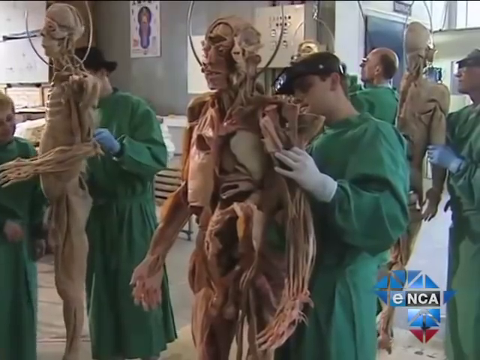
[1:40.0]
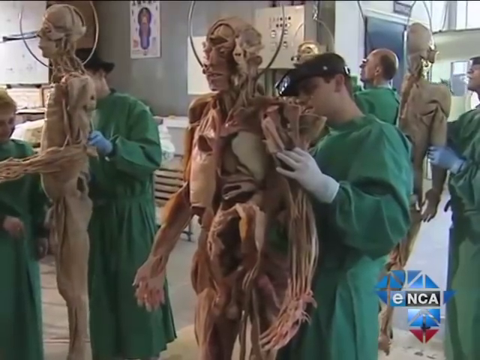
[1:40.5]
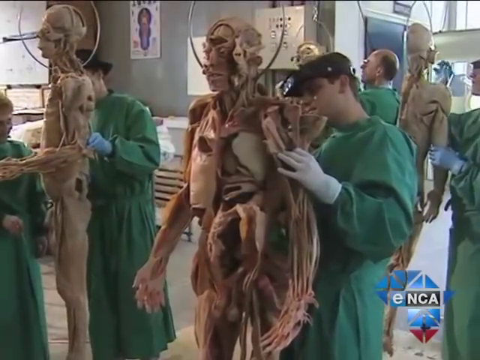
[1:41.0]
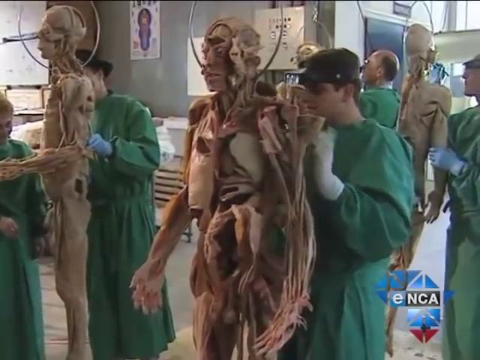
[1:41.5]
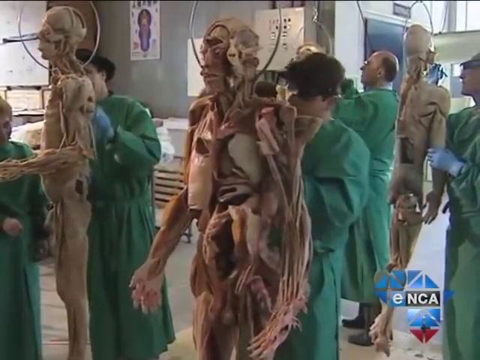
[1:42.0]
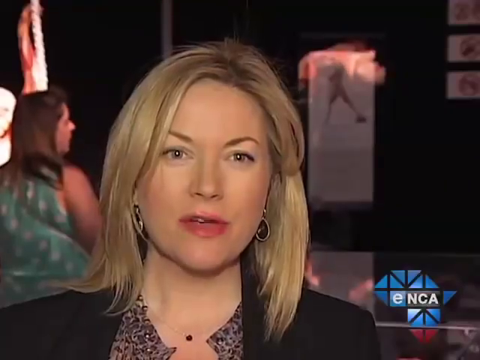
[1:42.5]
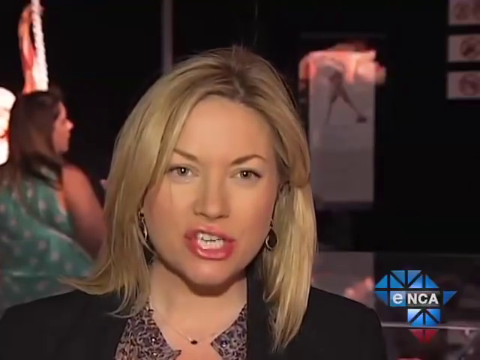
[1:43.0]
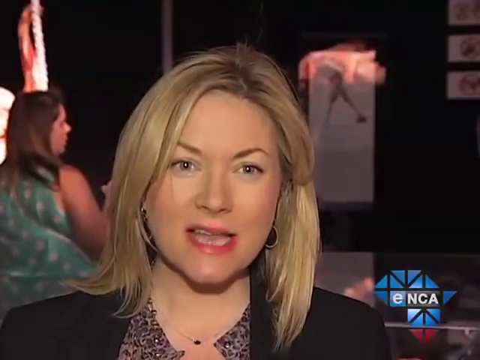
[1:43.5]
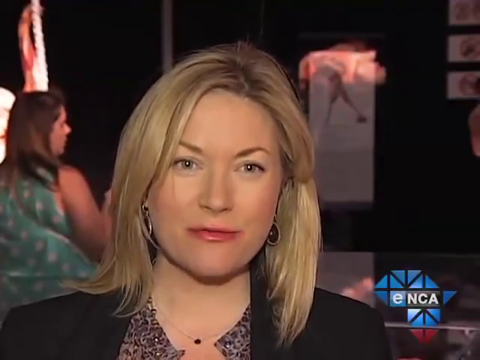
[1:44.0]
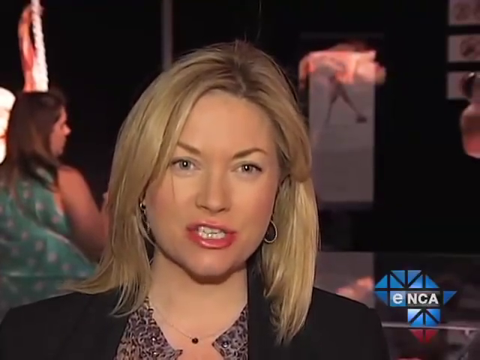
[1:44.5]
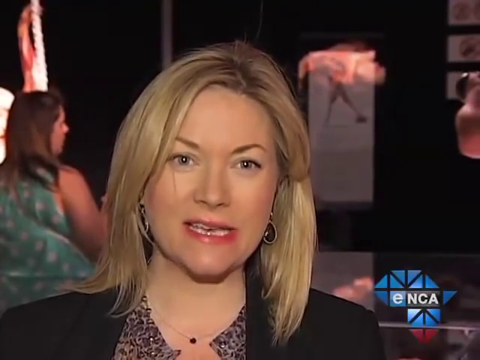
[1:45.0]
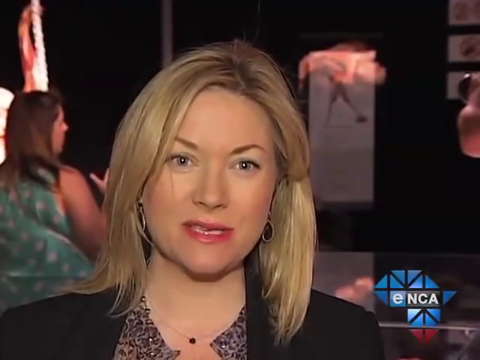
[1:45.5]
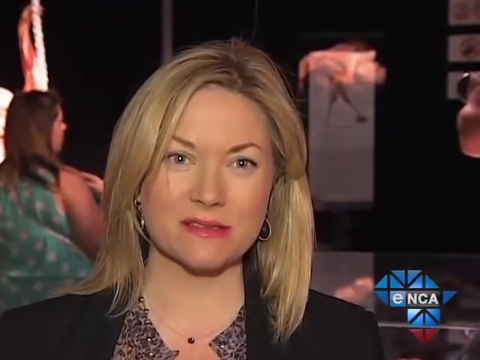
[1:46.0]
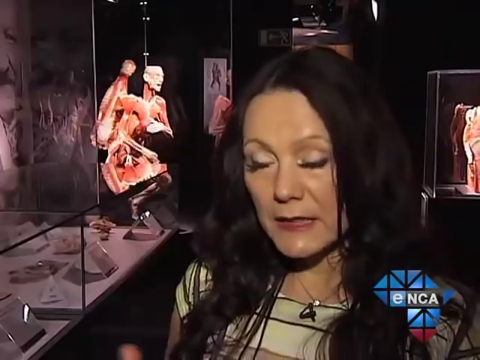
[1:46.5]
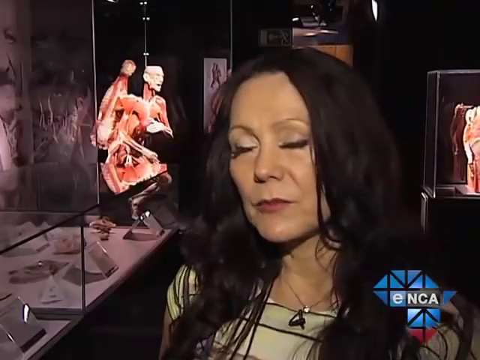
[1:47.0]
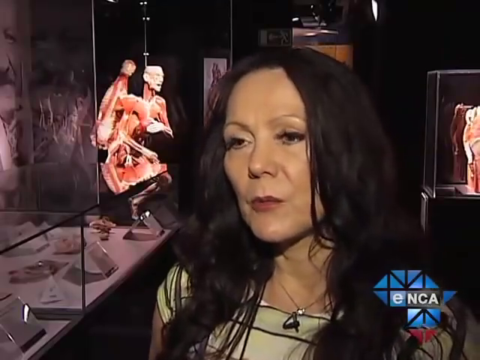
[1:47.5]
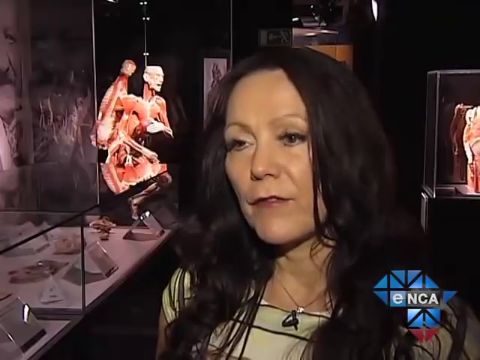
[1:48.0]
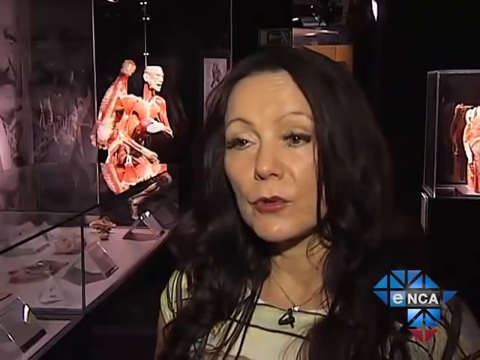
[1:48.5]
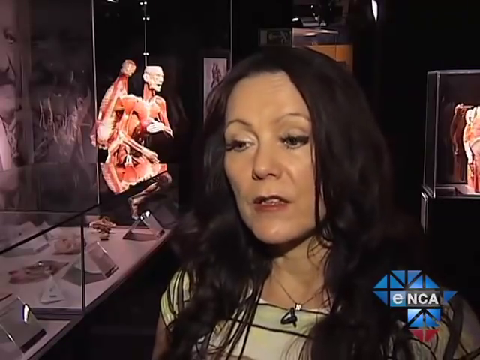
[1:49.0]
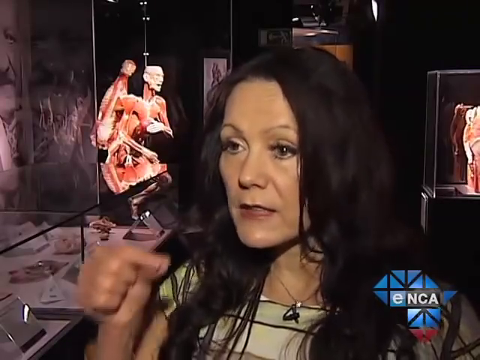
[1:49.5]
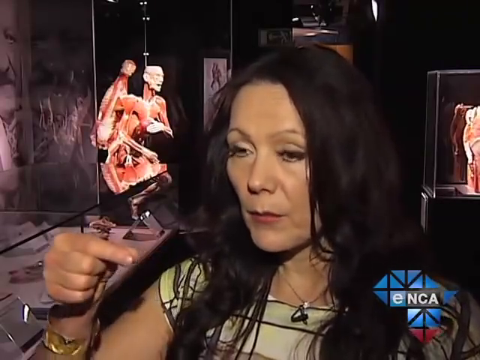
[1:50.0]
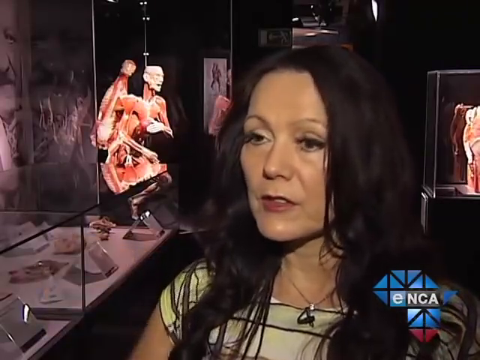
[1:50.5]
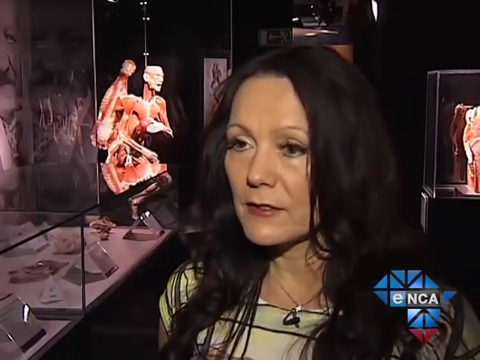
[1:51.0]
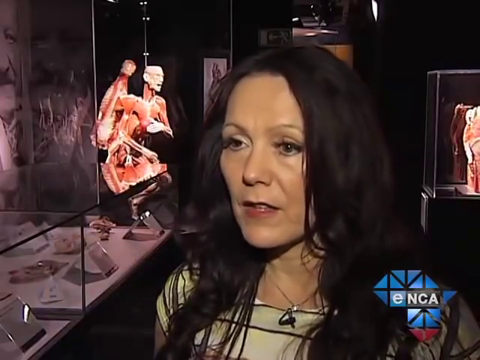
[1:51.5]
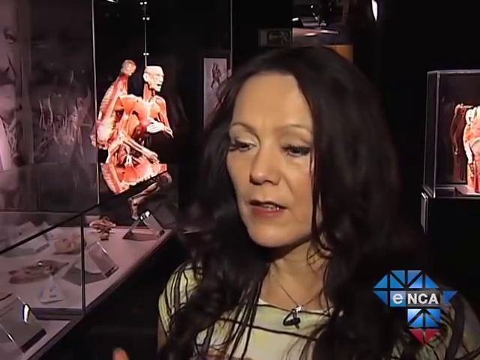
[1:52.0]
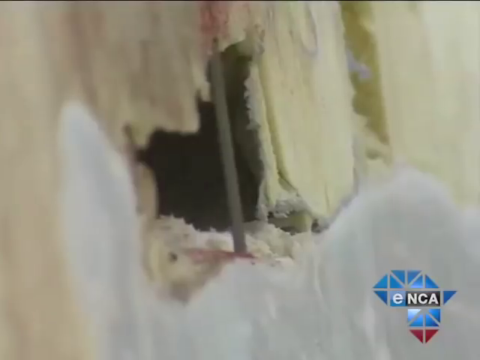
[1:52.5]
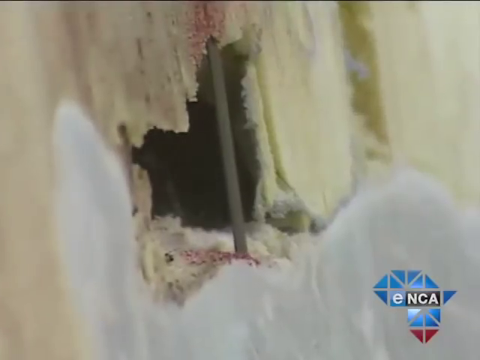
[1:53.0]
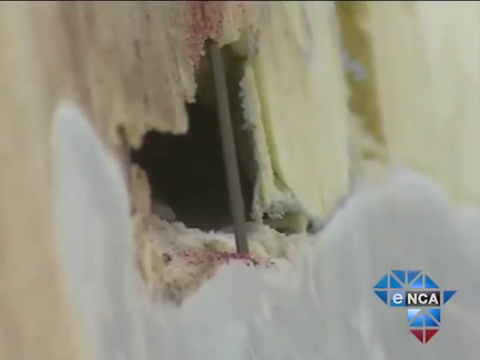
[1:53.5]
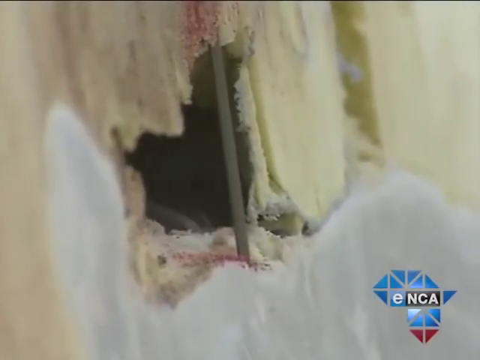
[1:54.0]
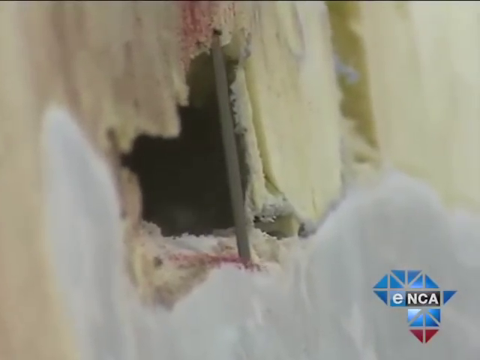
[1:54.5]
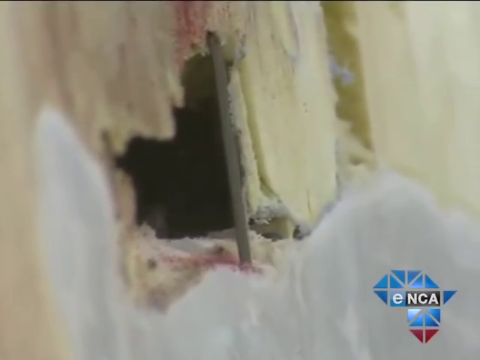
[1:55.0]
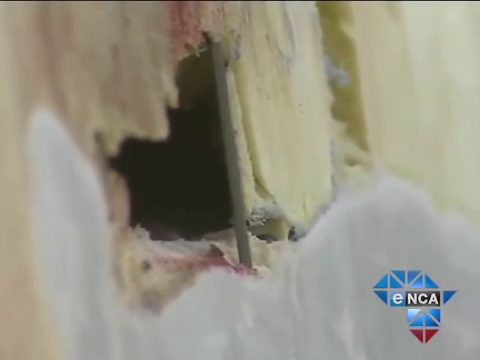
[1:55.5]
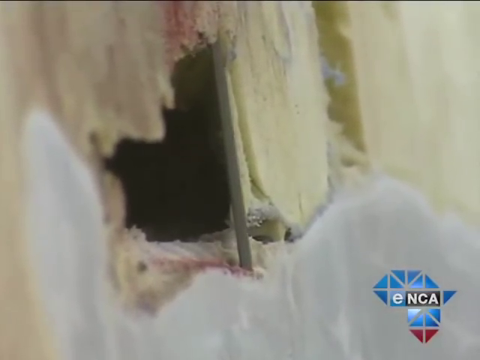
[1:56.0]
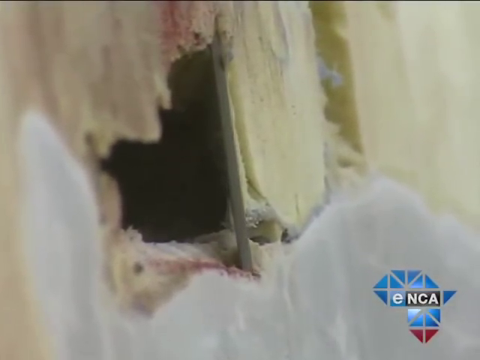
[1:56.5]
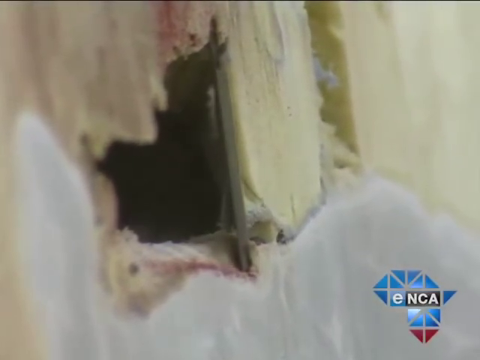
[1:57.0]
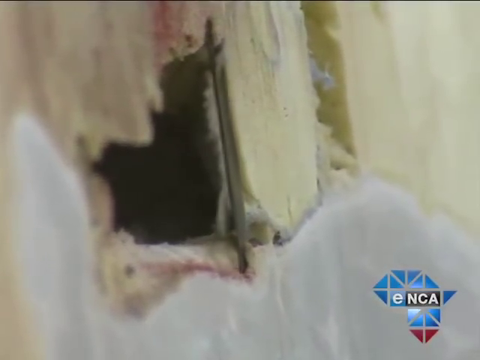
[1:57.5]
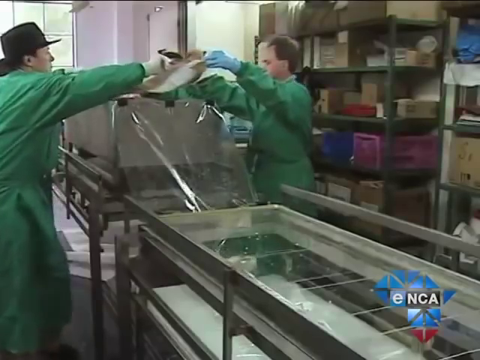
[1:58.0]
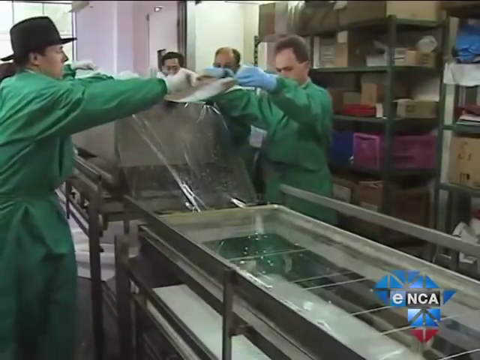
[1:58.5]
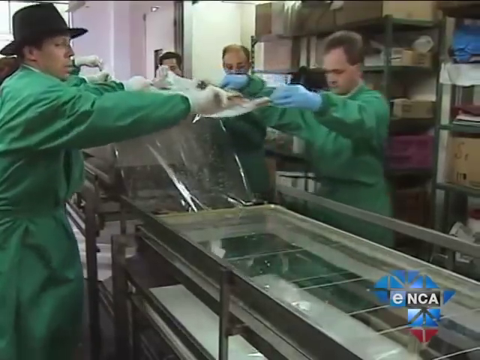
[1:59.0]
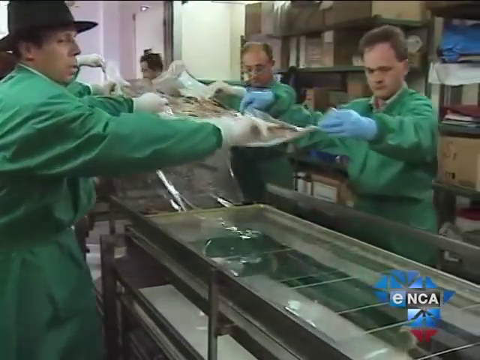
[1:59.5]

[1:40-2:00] Helpers and workers set up a display of human bodies, and a reporter interviews several of the people involved. The bodies have the skin removed so the ligaments, tendons and muscles inside are visible, possibly using cadavers. At the beginning, men working on the bodies hold them up, with something like a circular thing hanging from the ceiling holding the bodies upright. The workers wear plastic rubber gloves, something like visors, and blue doctor's scrubs.